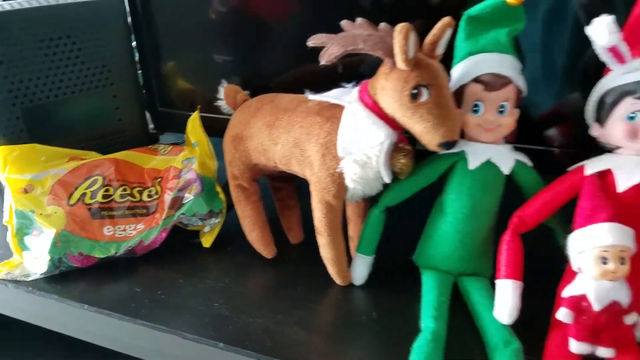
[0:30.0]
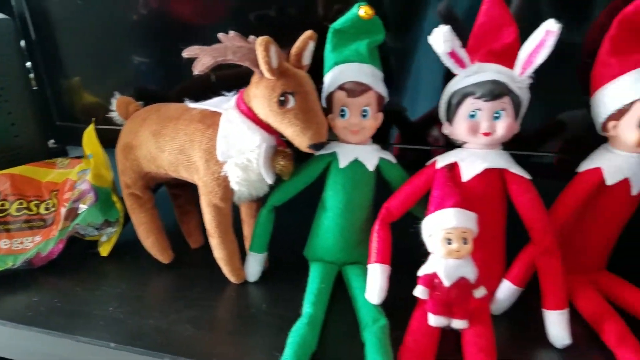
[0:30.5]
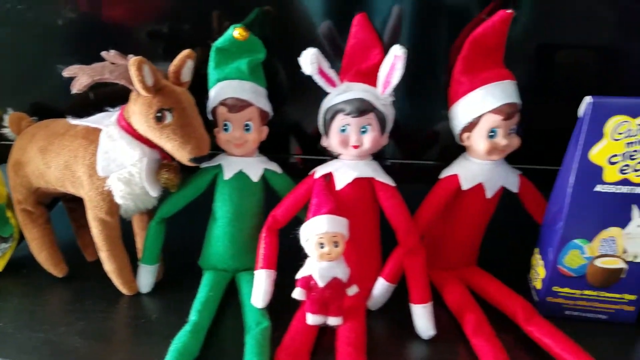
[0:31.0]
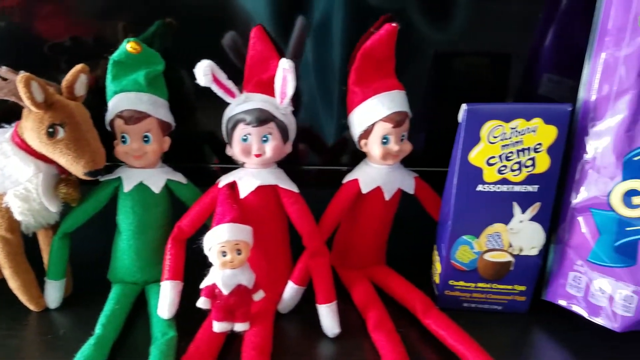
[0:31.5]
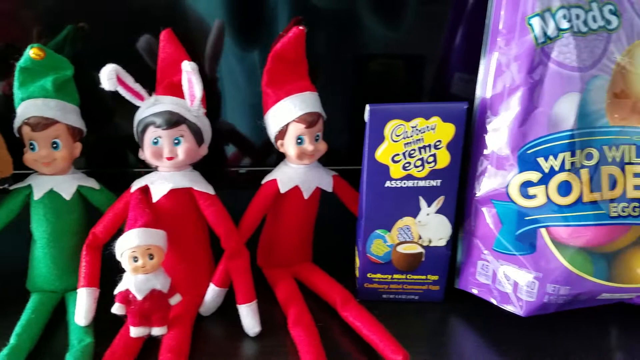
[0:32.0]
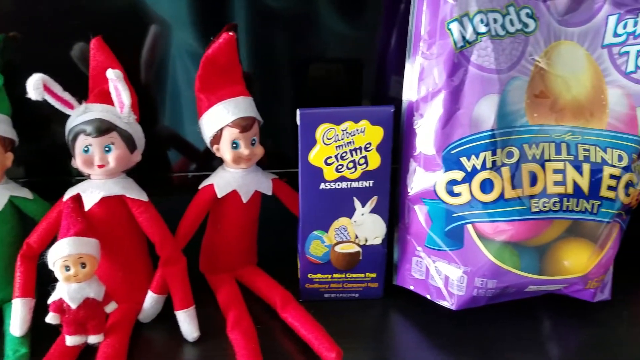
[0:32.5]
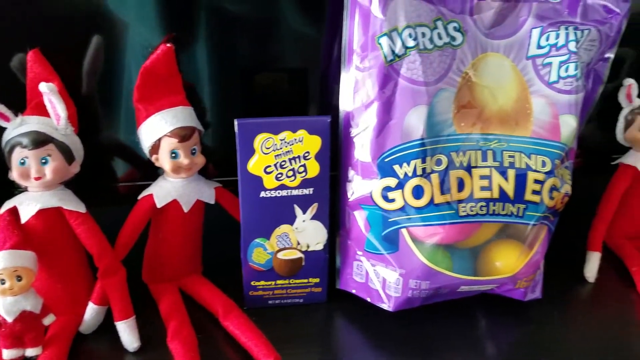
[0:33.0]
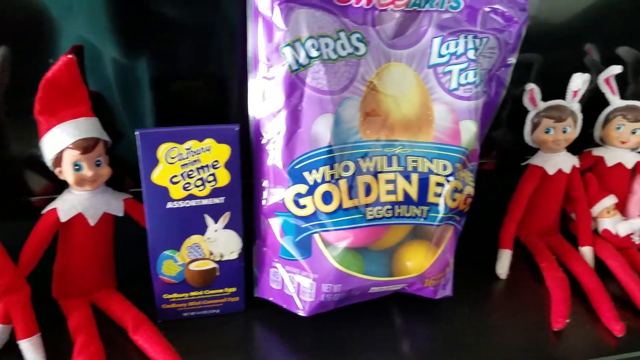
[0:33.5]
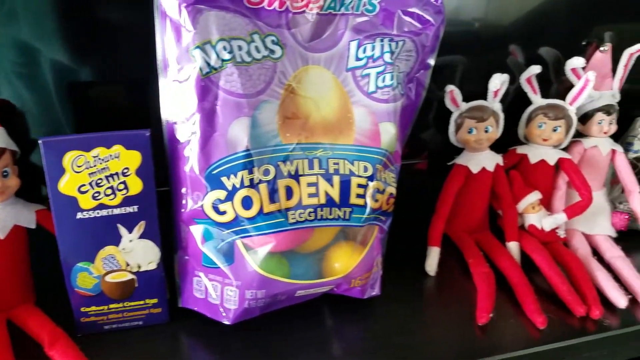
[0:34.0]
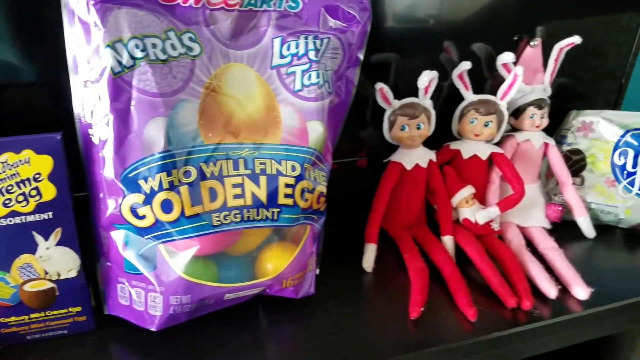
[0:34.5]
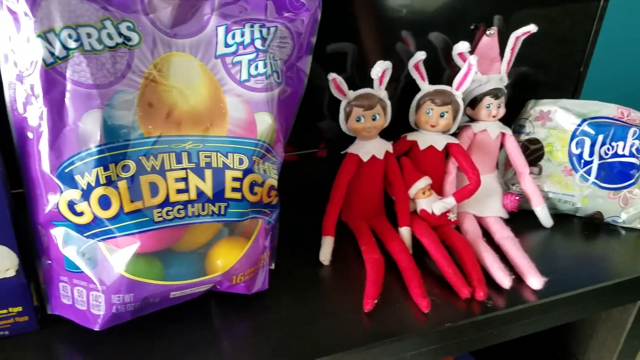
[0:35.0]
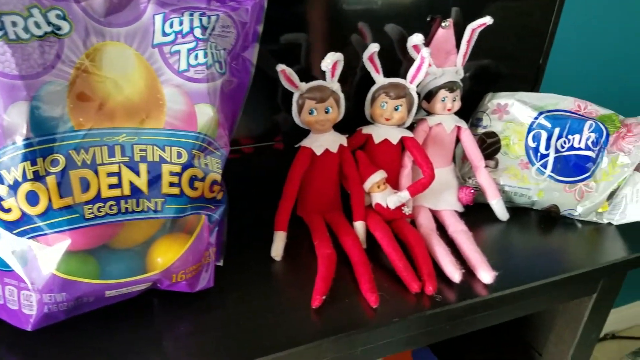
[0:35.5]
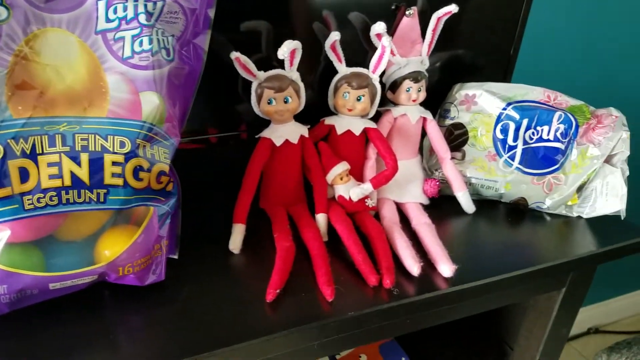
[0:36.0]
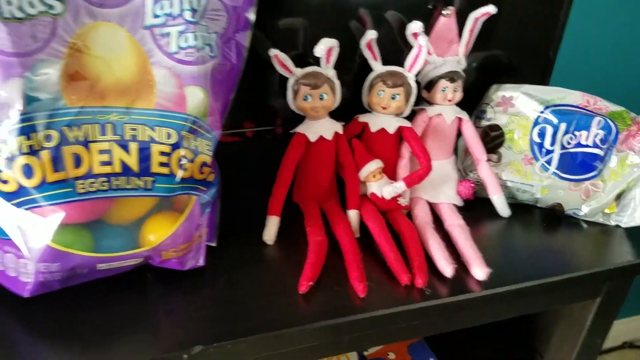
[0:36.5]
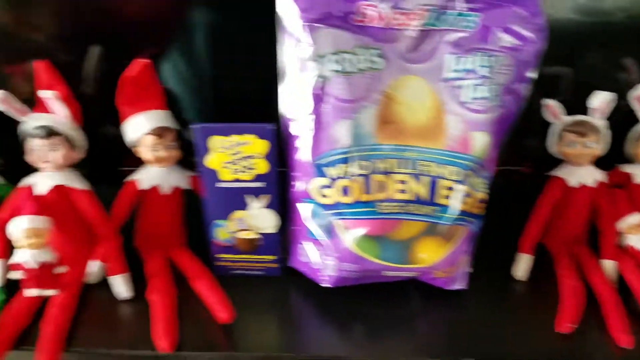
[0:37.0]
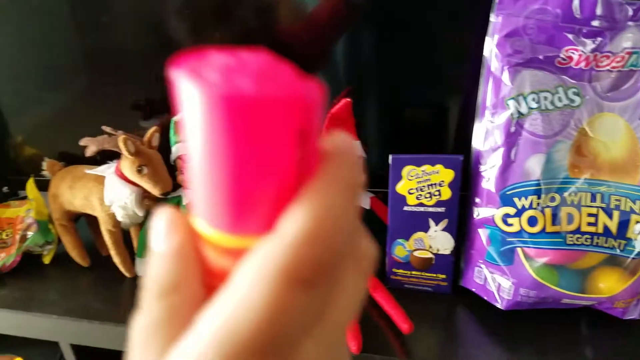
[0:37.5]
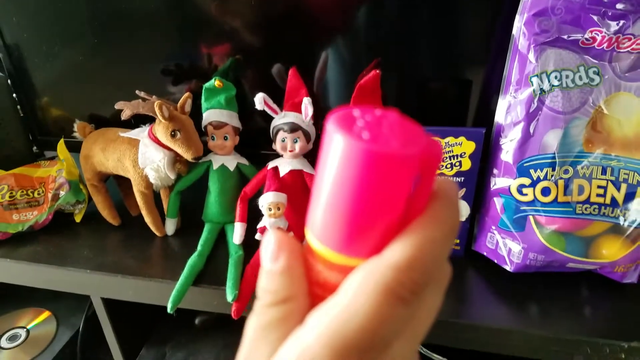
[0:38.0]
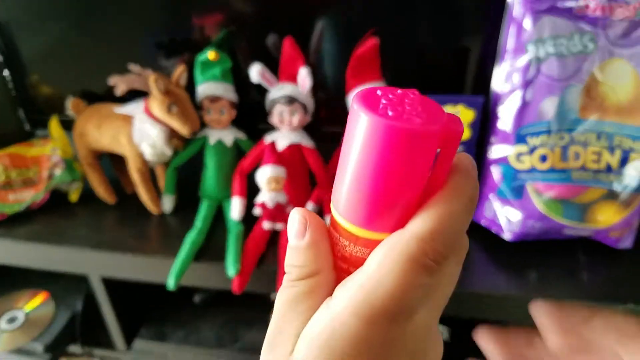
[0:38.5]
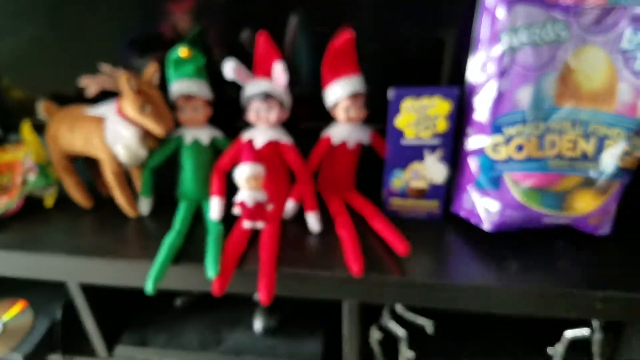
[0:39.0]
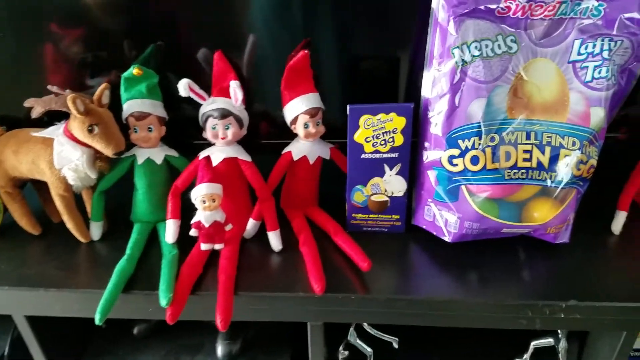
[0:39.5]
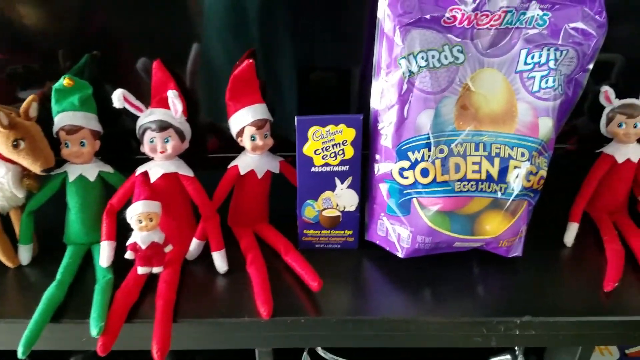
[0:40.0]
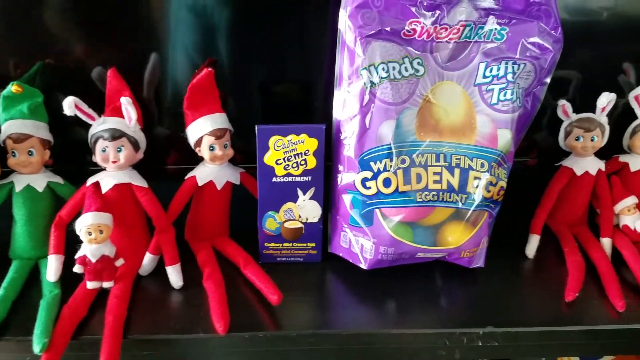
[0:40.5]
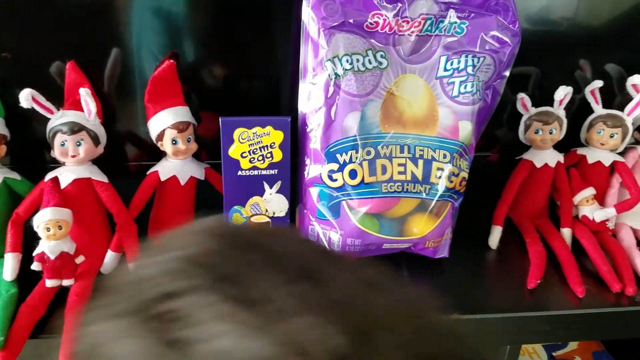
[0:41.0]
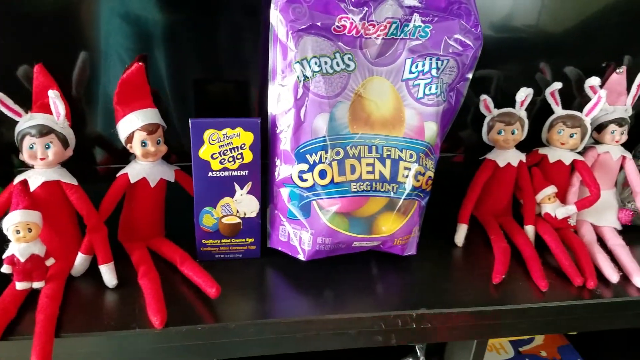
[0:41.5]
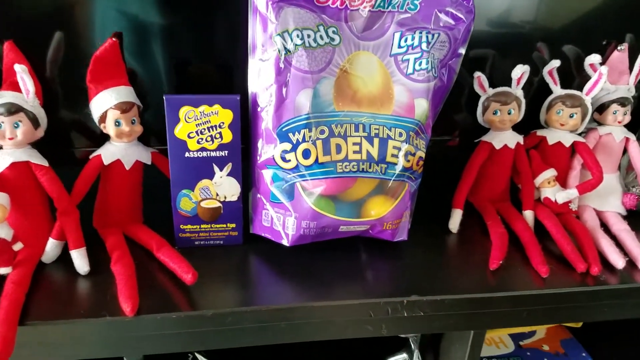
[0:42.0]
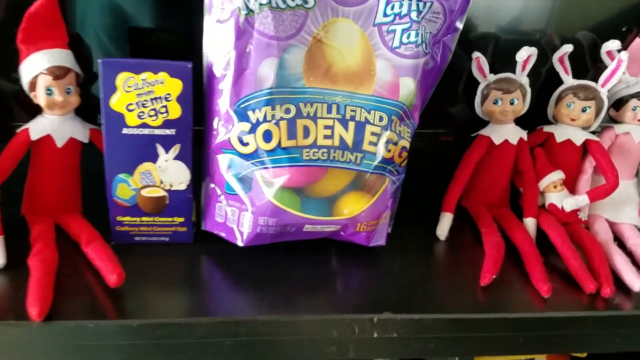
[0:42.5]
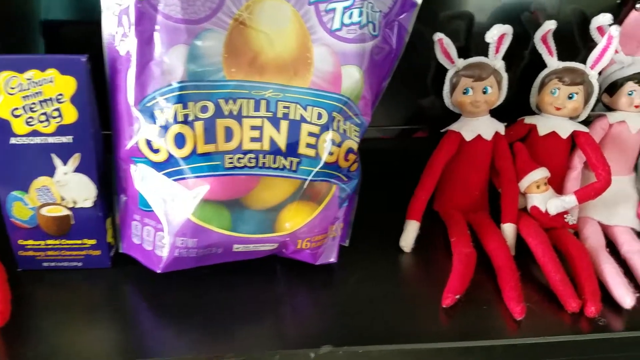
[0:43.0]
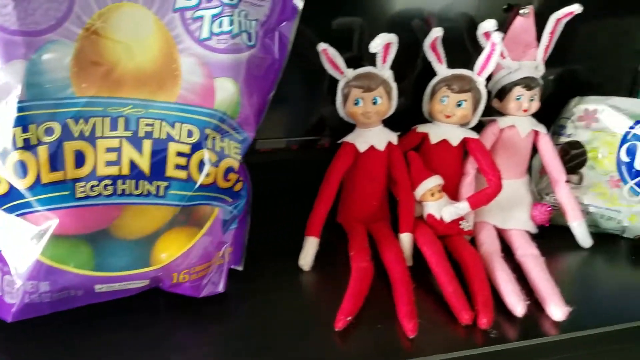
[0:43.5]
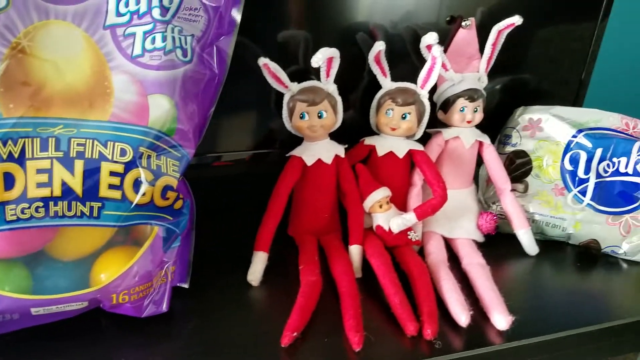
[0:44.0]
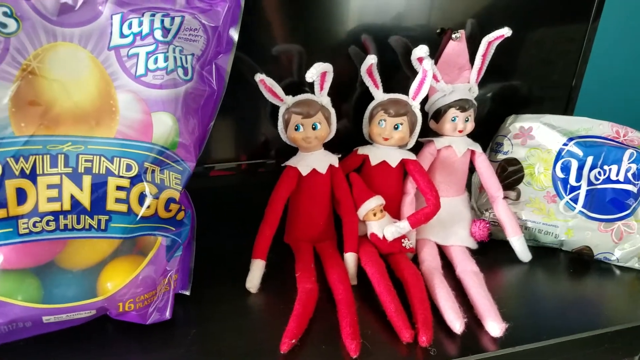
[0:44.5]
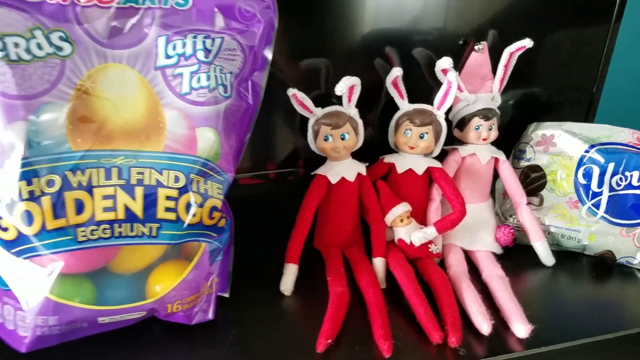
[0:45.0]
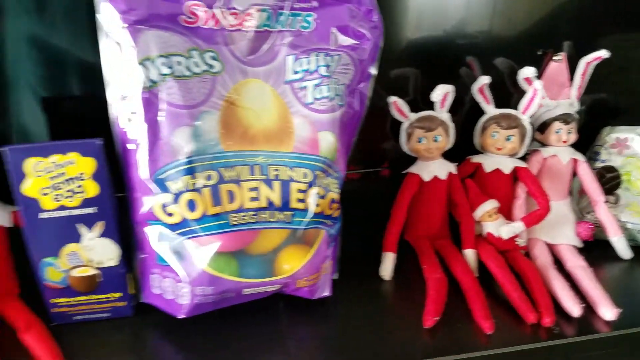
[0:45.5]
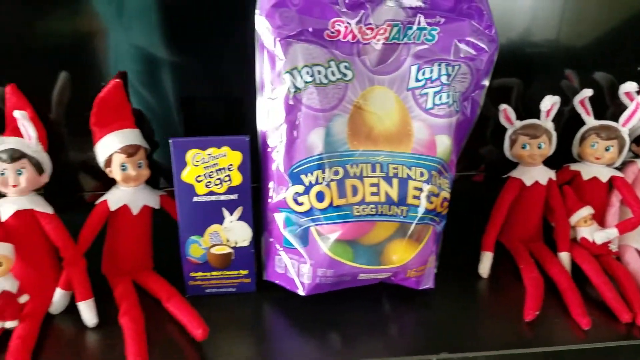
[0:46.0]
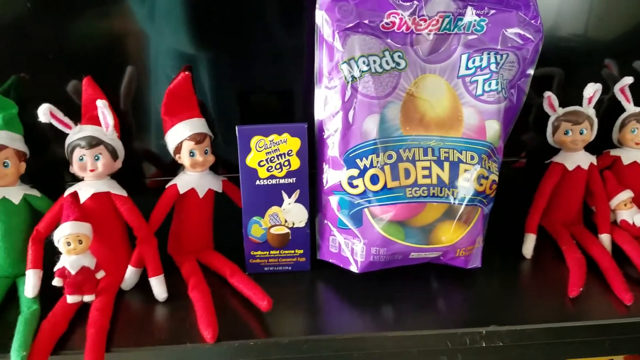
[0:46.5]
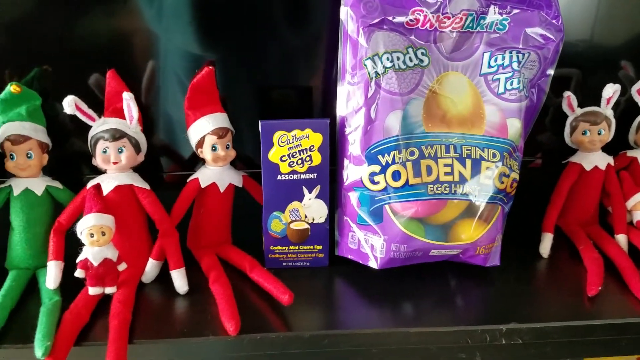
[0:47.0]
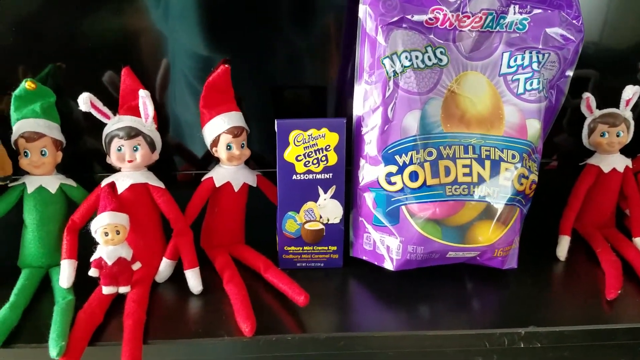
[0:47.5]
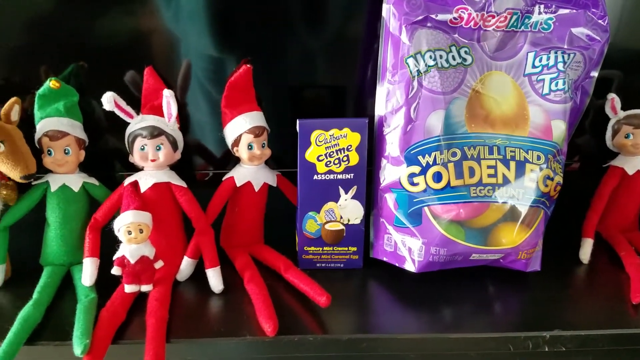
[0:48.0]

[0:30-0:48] A black shelf holds a few Elf on the Shelf toys and packages of candy, and the camera pans from left to right, showing all of the objects. On the left side of the shelf is a bag of Reese's candy, and to its right is a small light brown stuffed reindeer. To the right of that are three Elf on the Shelf toys, one in a green outfit and two in red outfits, all wearing Santa hats. The one in the middle also has white bunny ears and holds a small baby in a little Santa outfit on its lap. To the right is a purple box of Cadbury cream egg assortment, then a large light purple bag of some type of candy eggs. To the right of that are three more Elf on the Shelf toys, two in red and one in pink, all with bunny ears; the middle one holds a small baby wearing a Santa uniform. Further right is a package of York chocolate candies. As the camera pans back and forth, a hand comes into view, apparently holding some type of candy with a cylinder shape, an orange body and a pink lid. The hand holds it in front of the camera, and another hand seems to snatch the candy away and move off screen. A little kid runs past, ducking down, so only the top of a brown-haired head is visible. The camera continues to examine the items on the shelf.